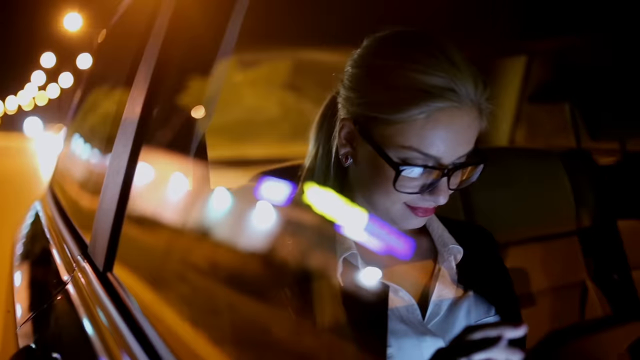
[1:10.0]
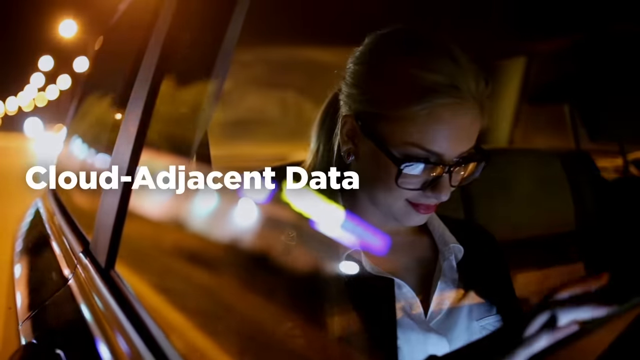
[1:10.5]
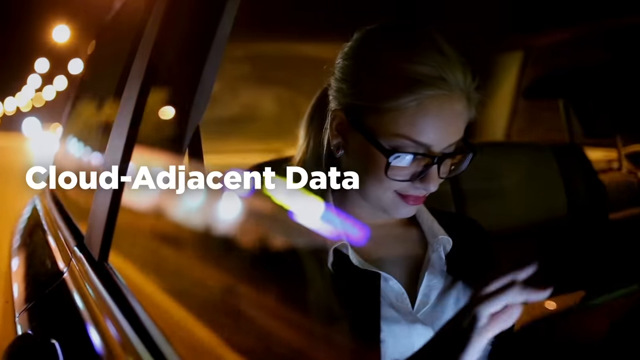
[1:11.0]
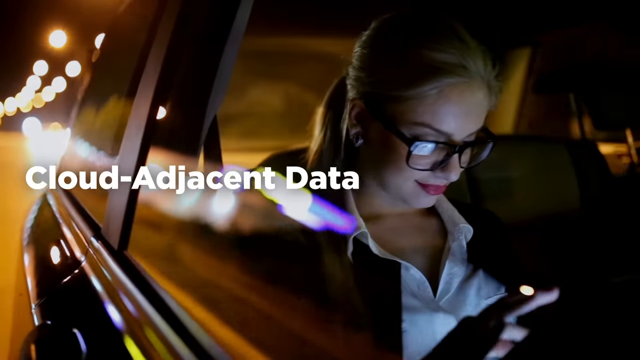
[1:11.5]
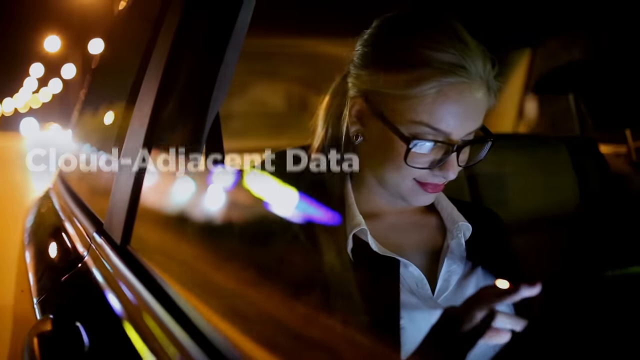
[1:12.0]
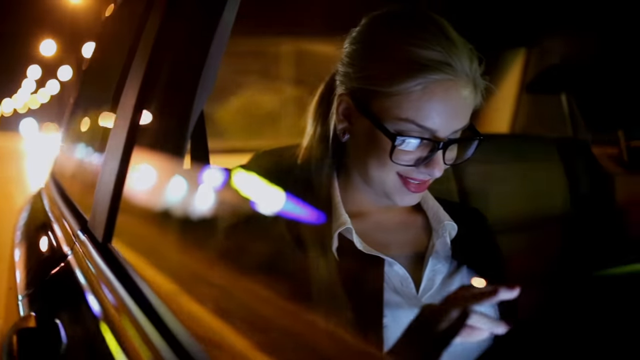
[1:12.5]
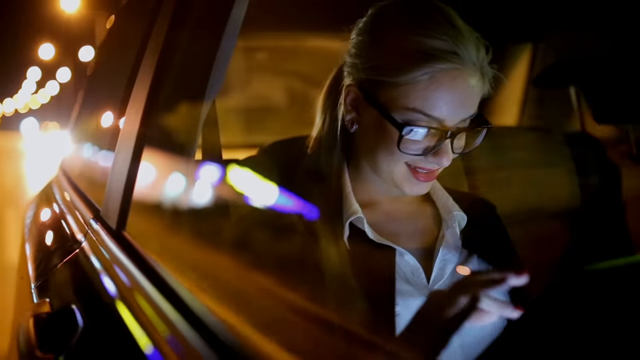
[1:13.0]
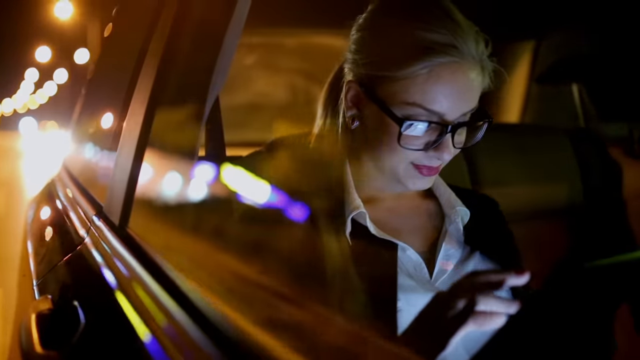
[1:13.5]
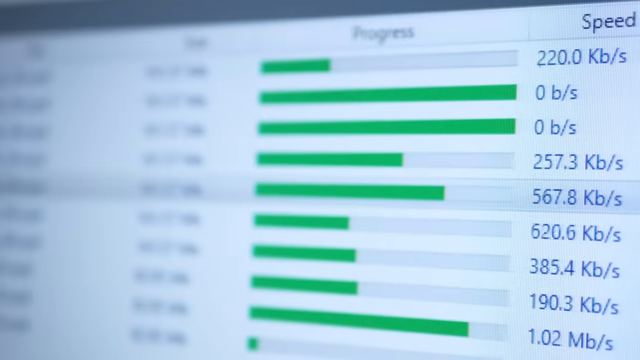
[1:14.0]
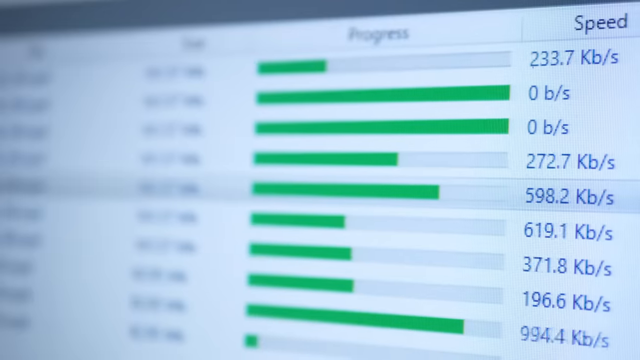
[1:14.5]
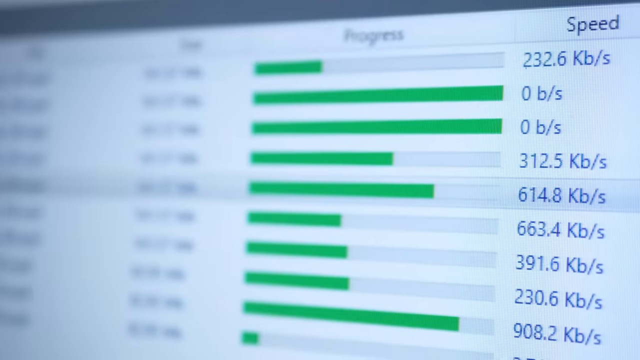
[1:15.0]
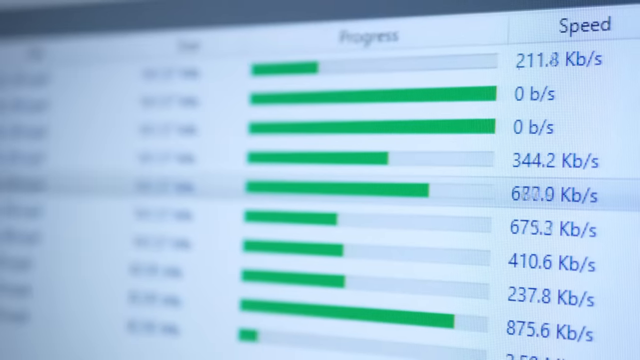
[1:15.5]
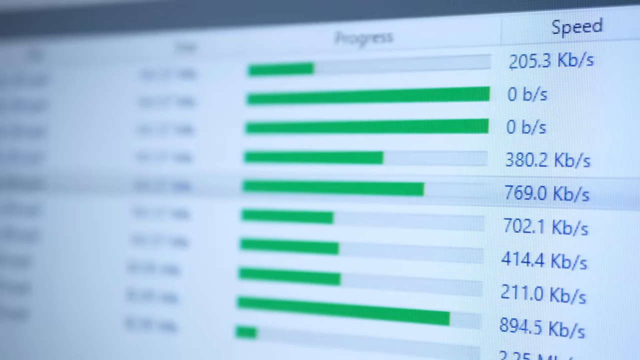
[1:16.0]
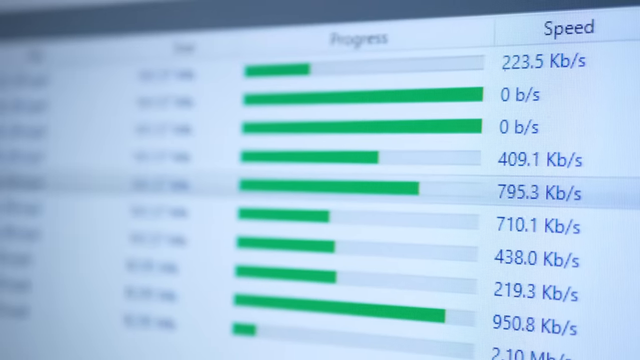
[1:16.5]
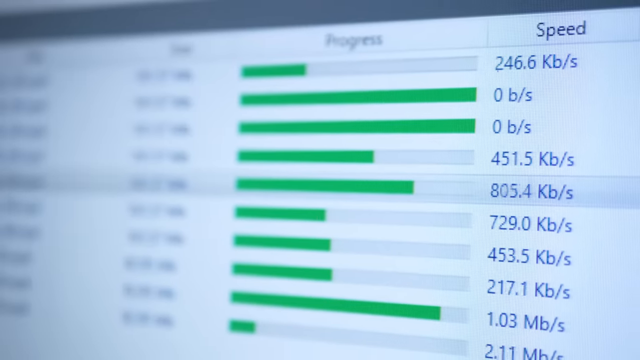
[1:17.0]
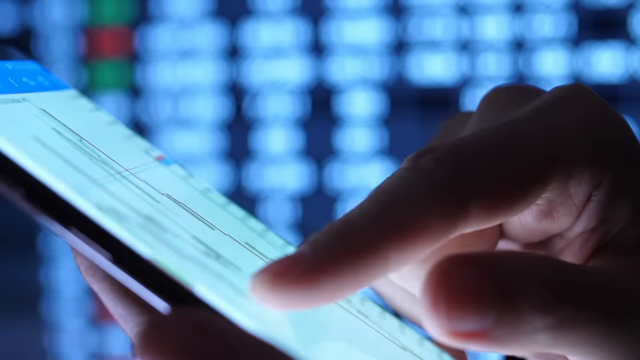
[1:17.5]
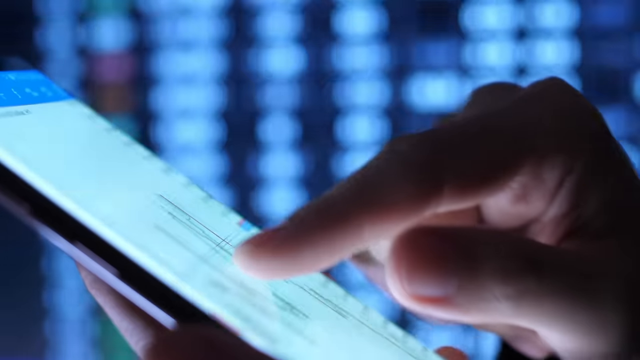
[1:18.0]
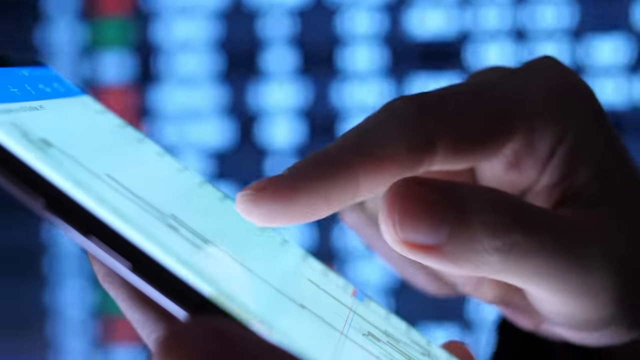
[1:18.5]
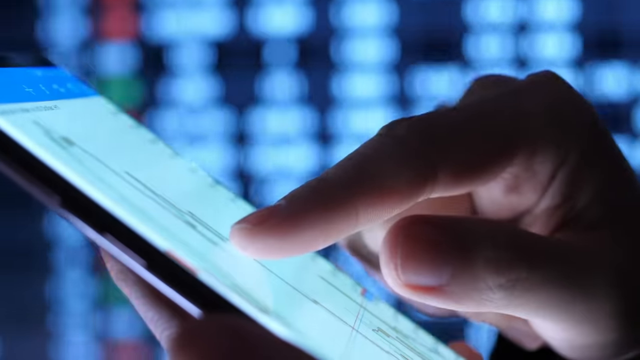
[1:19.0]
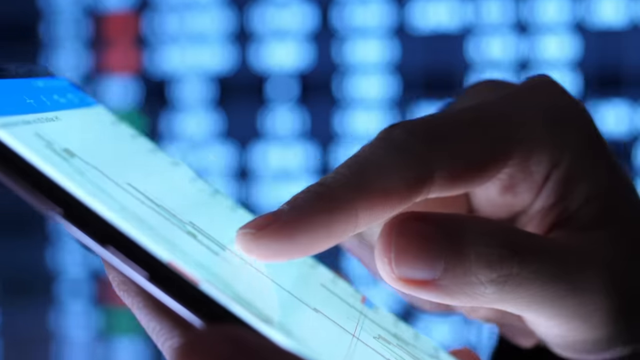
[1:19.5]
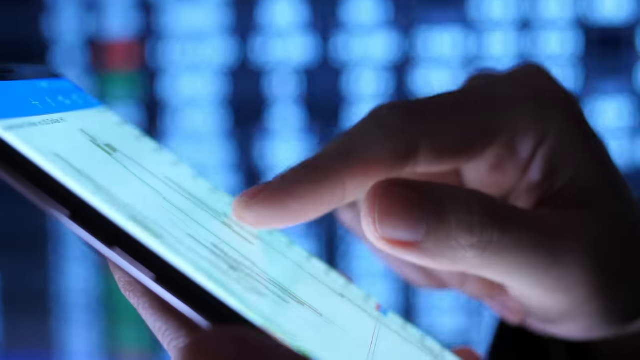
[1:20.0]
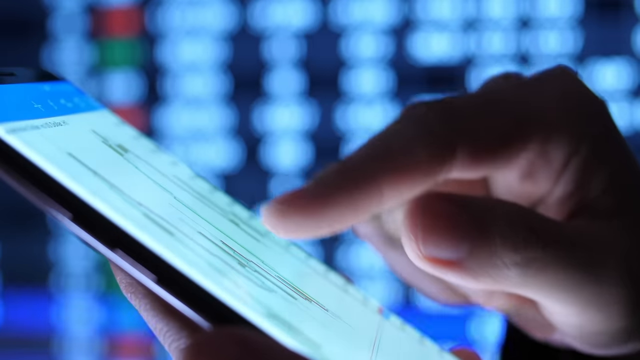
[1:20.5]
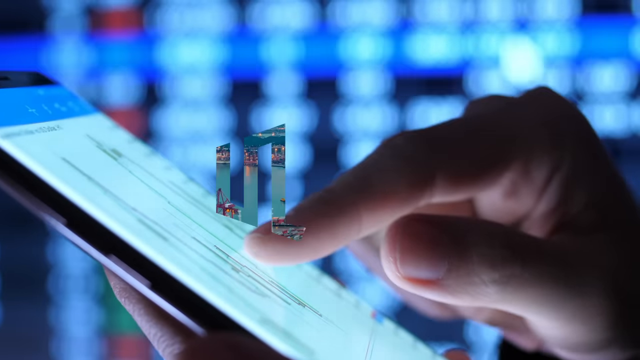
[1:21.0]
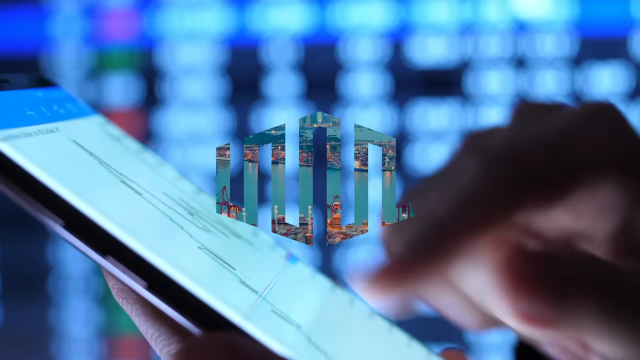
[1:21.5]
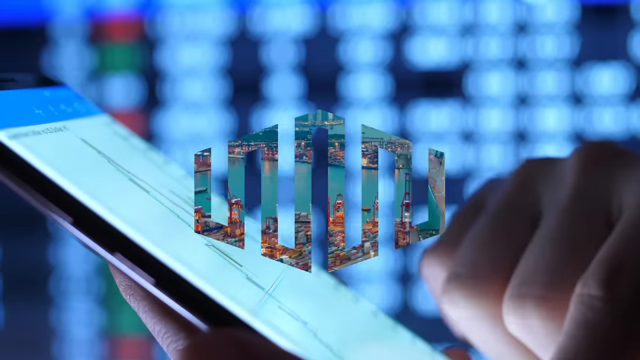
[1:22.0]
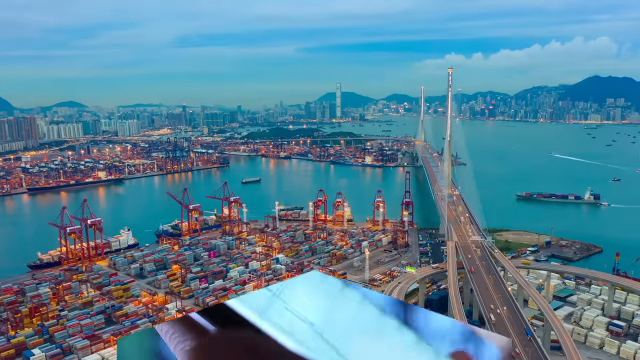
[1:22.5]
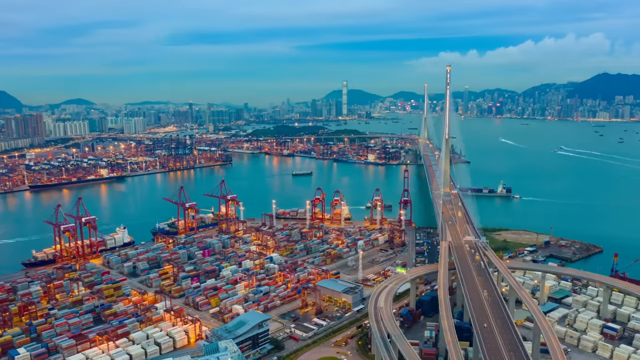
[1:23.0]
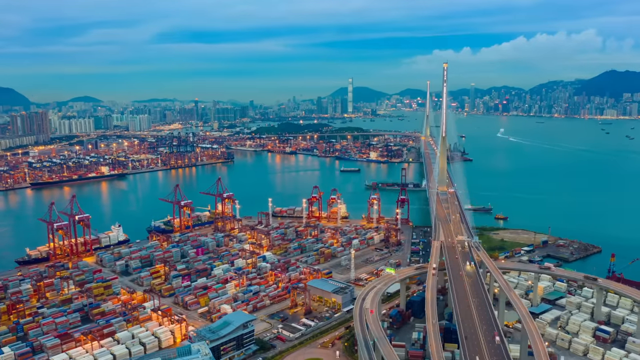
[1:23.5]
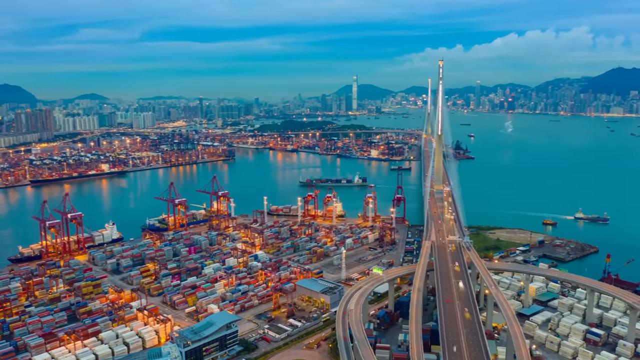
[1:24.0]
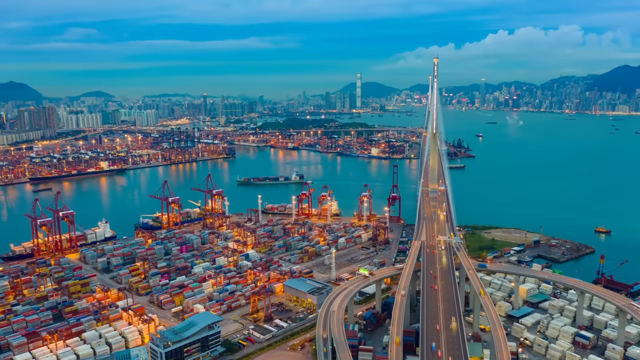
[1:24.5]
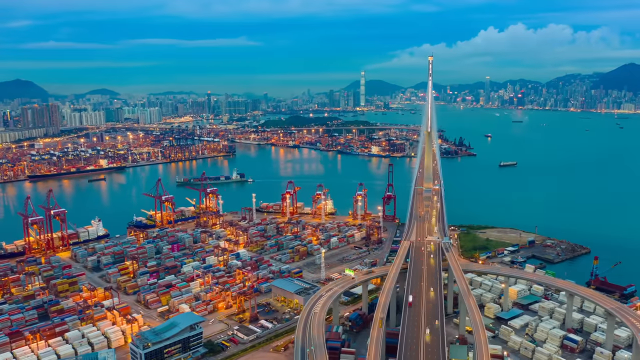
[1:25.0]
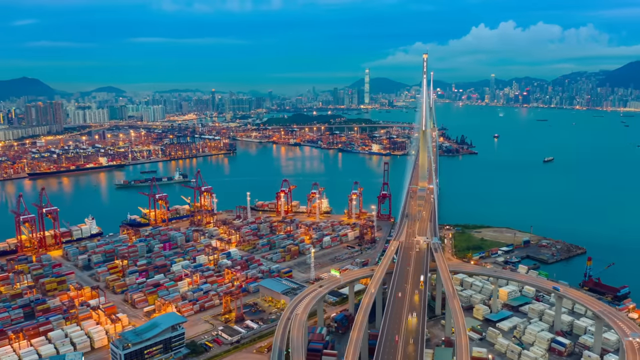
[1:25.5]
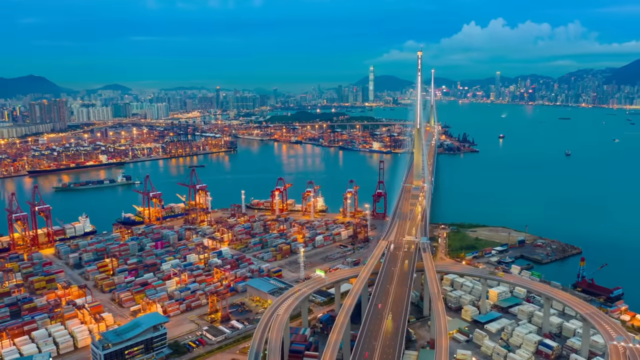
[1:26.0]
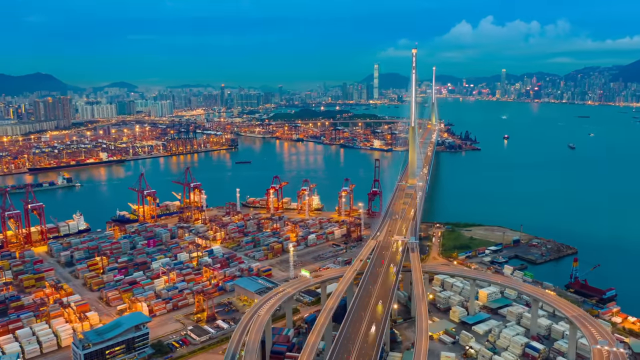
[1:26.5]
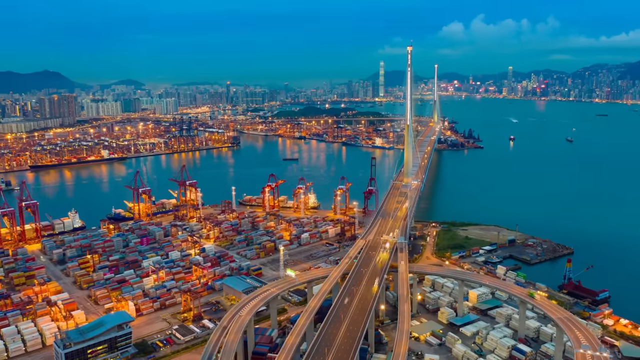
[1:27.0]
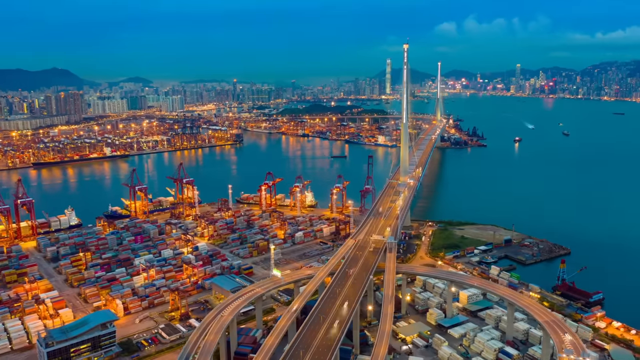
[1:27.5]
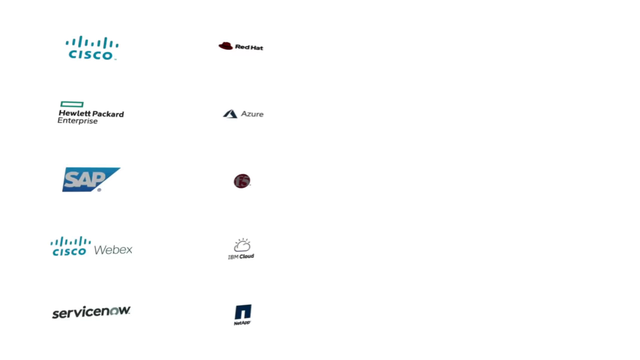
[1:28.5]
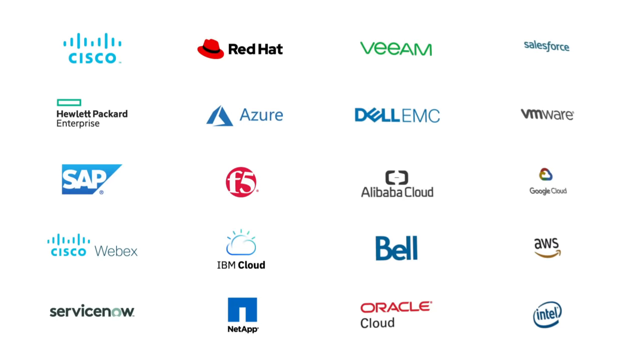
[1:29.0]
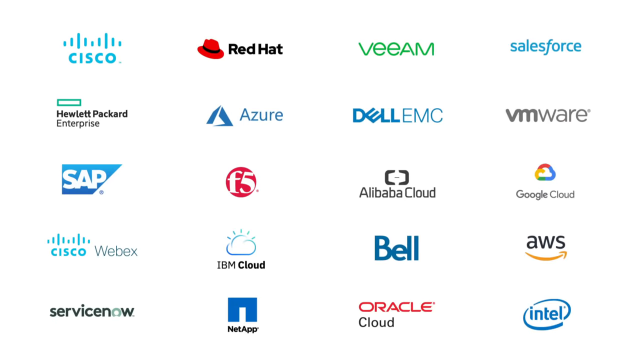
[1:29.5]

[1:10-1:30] A woman does something with an iPad or a phone at nighttime, possibly in an Uber. Green graphics on a screen show computer speeds of how fast data is transferred. The person is on a phone or iPad. The view returns to the city look, over a river, with buildings, clouds in the background and a lot of blue. A woman wears a virtual reality headset. A computer screen shows a lot of flashing numbers indicating the speed of data. Blue buildings, blue water and a cloudy blue sky move quickly past, representing the information superhighway. Logos of many services appear: SAP, Cisco, Red Hat, Venum, Salesforce, VMware, Google Cloud, AWS, Bell, Oracle Cloud, F5 and Azure.